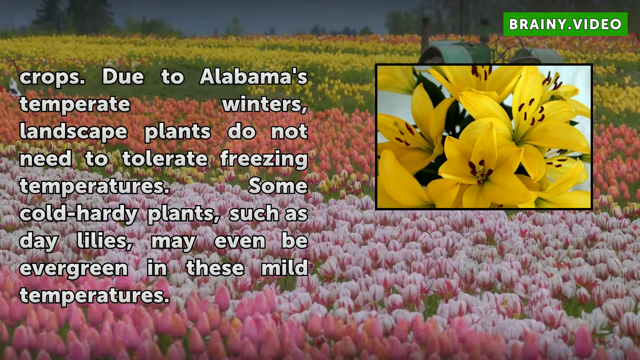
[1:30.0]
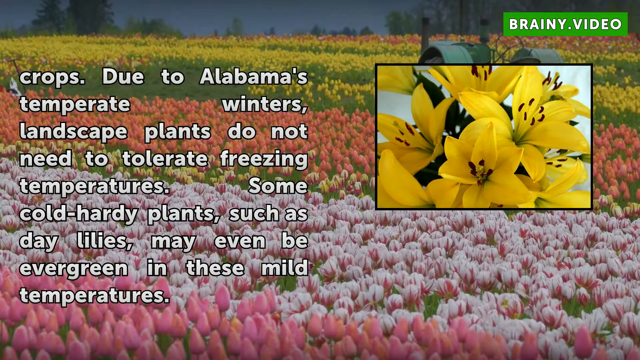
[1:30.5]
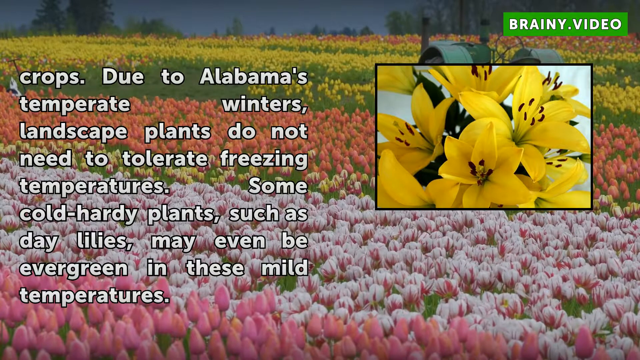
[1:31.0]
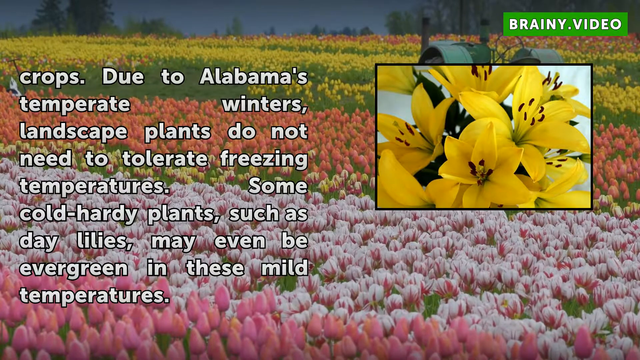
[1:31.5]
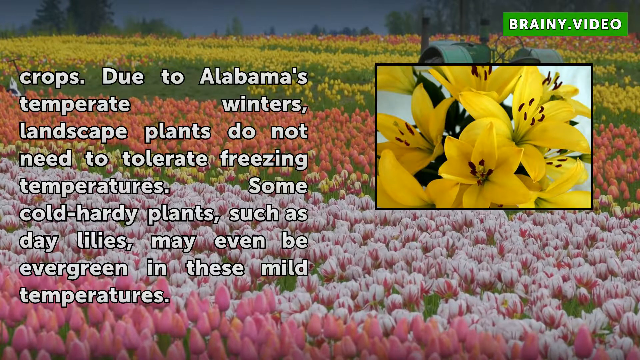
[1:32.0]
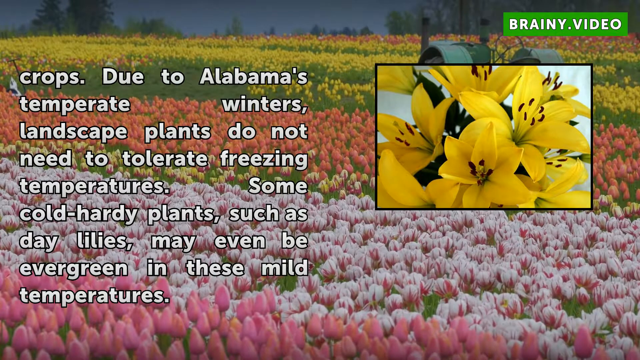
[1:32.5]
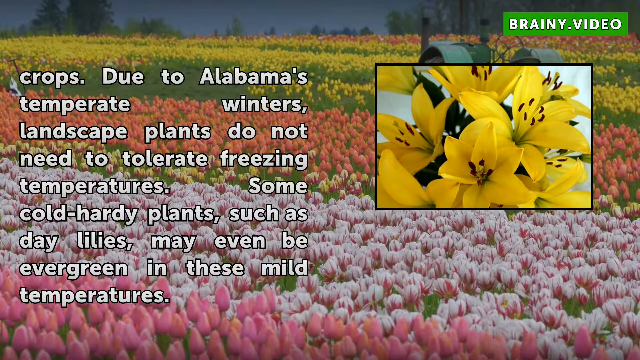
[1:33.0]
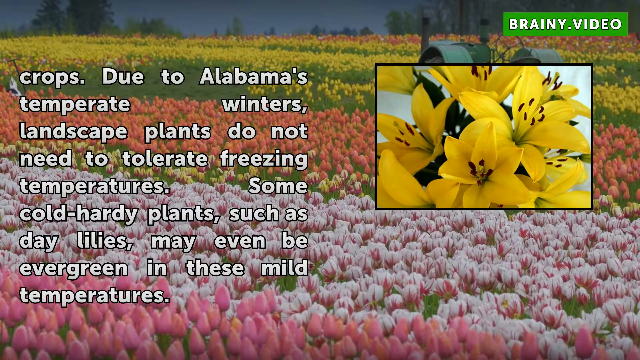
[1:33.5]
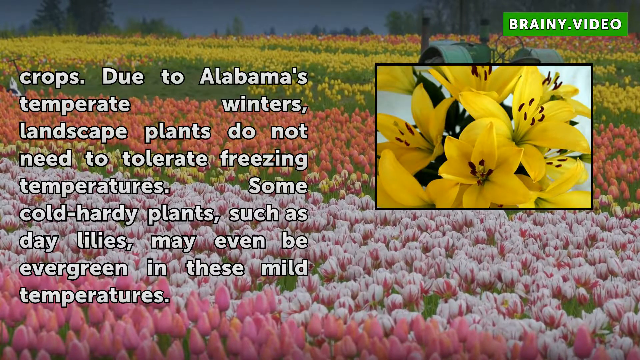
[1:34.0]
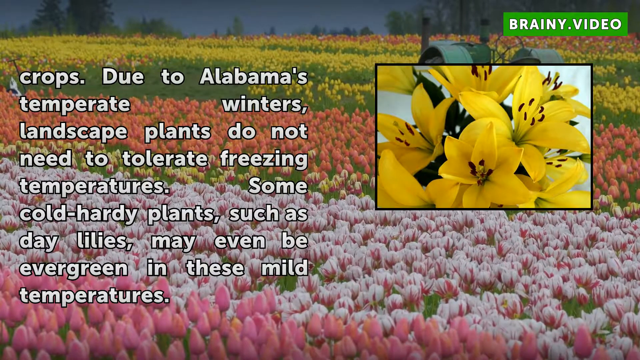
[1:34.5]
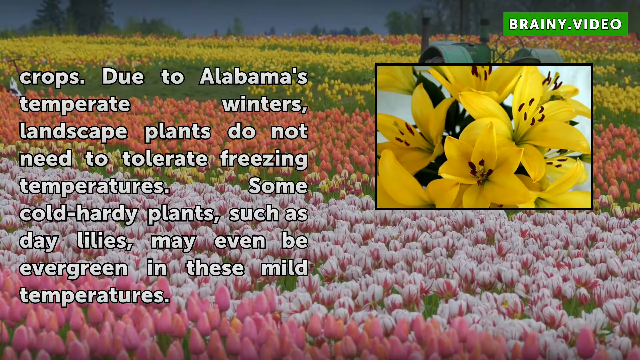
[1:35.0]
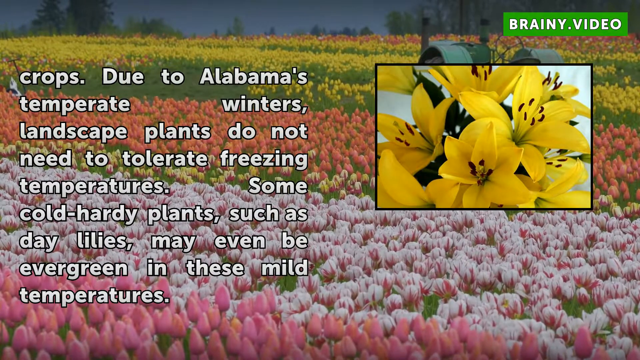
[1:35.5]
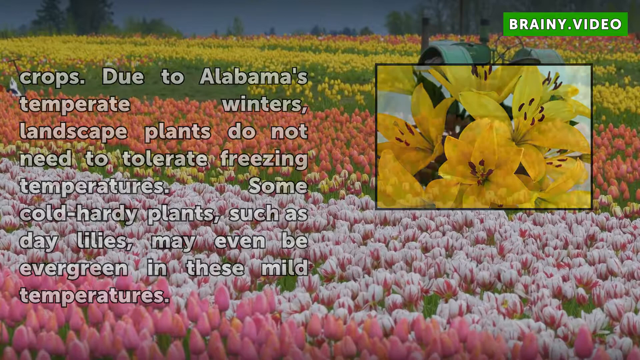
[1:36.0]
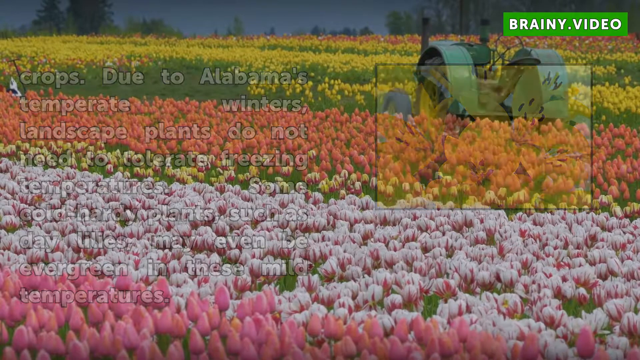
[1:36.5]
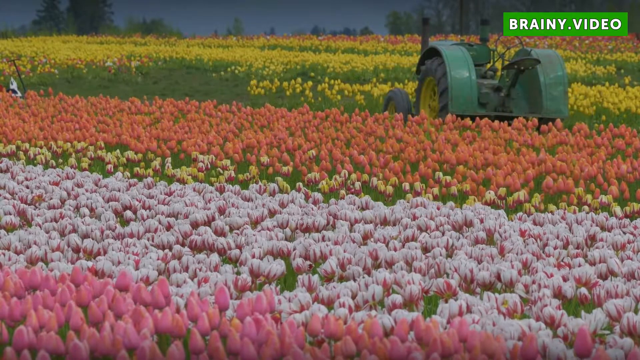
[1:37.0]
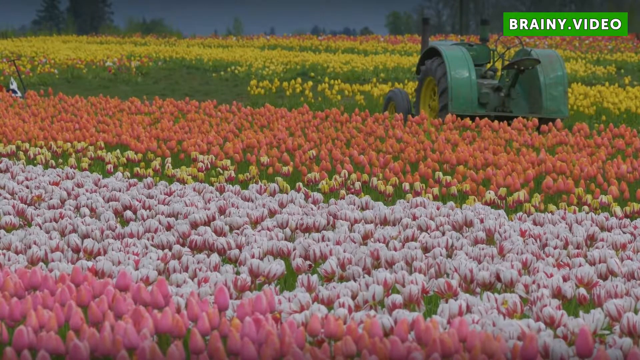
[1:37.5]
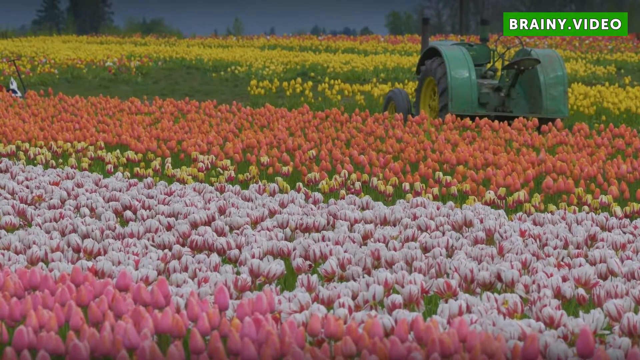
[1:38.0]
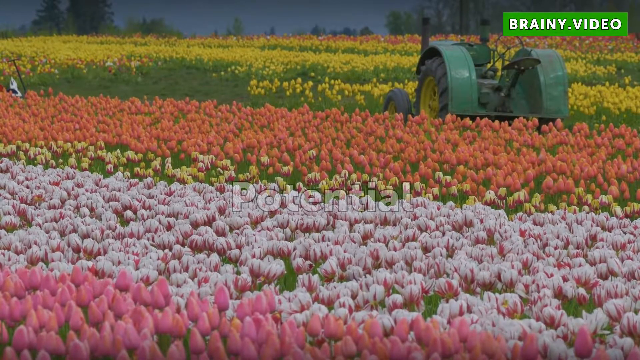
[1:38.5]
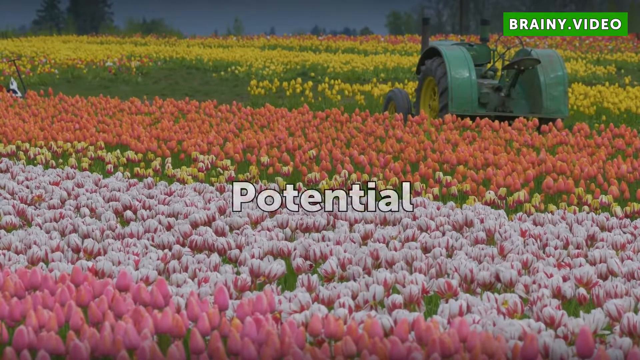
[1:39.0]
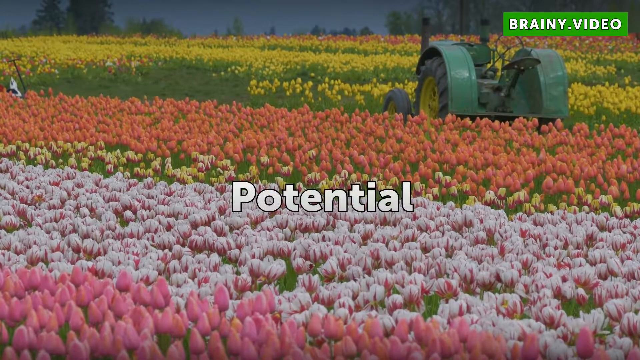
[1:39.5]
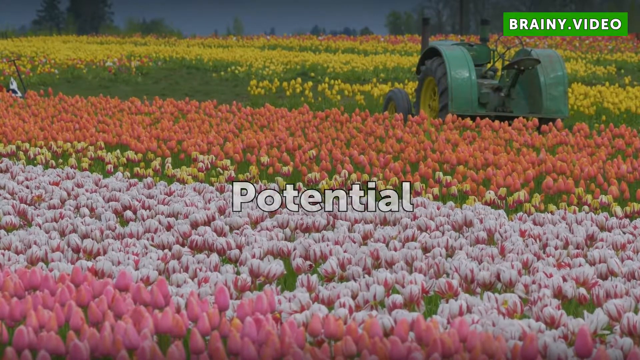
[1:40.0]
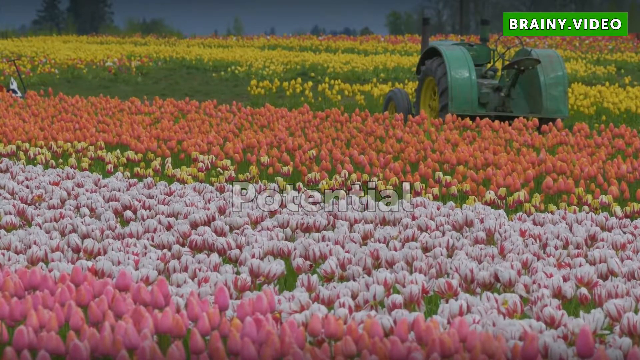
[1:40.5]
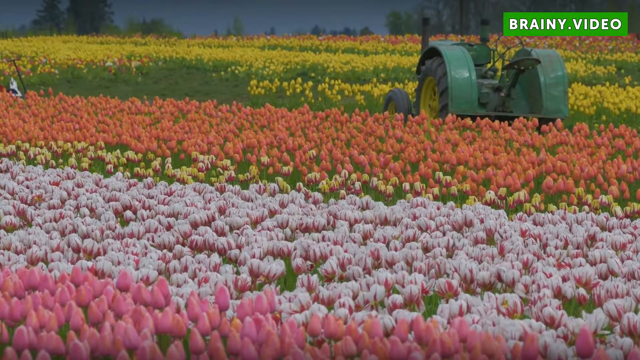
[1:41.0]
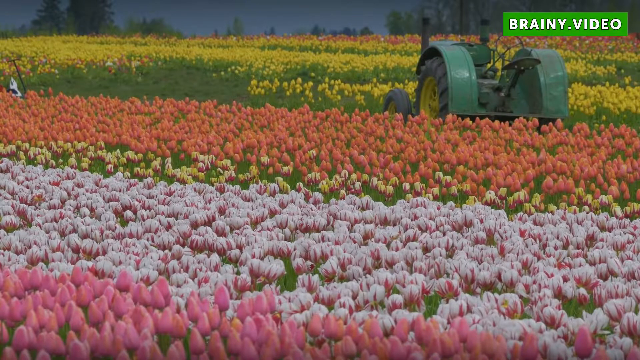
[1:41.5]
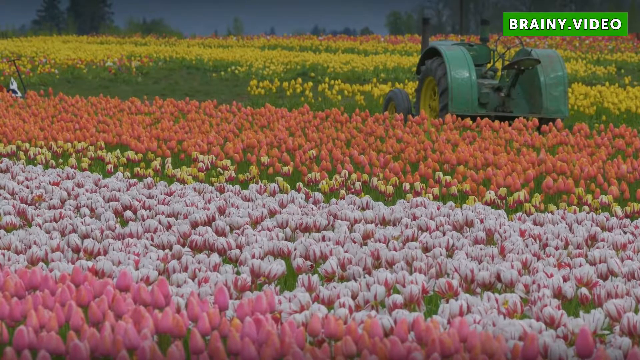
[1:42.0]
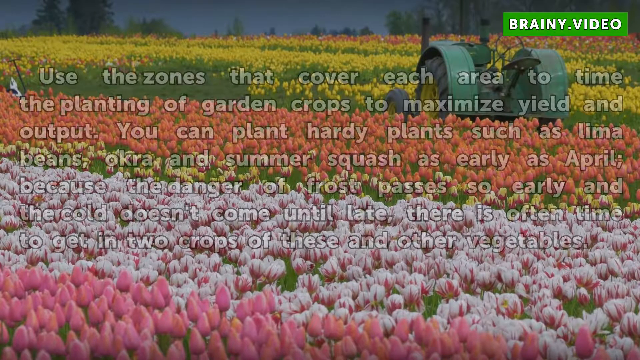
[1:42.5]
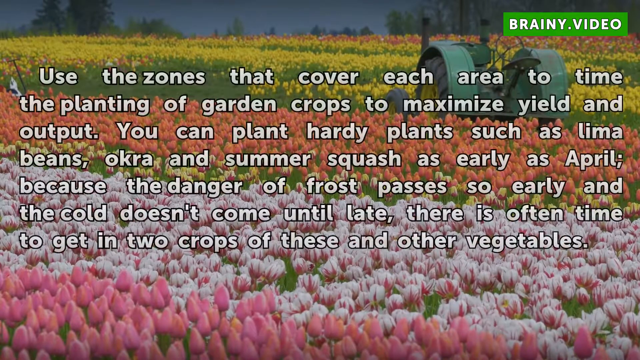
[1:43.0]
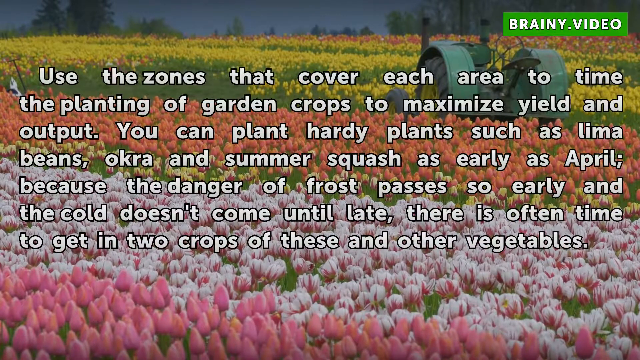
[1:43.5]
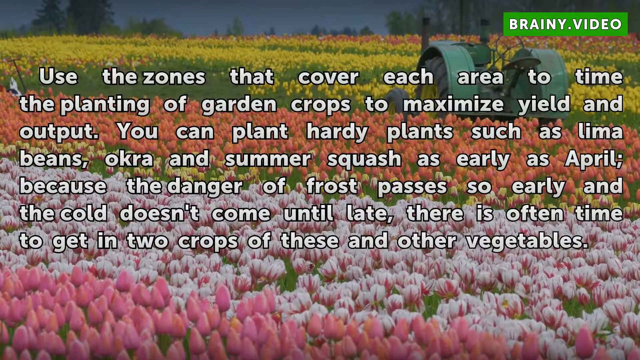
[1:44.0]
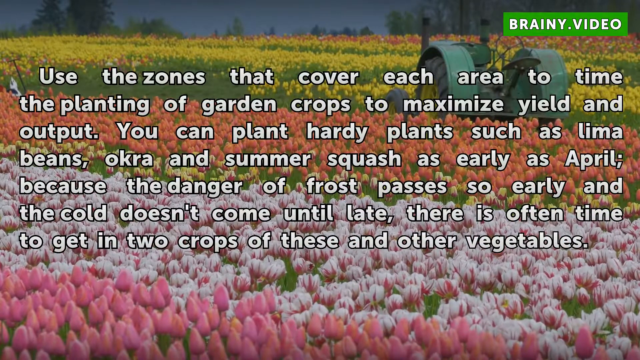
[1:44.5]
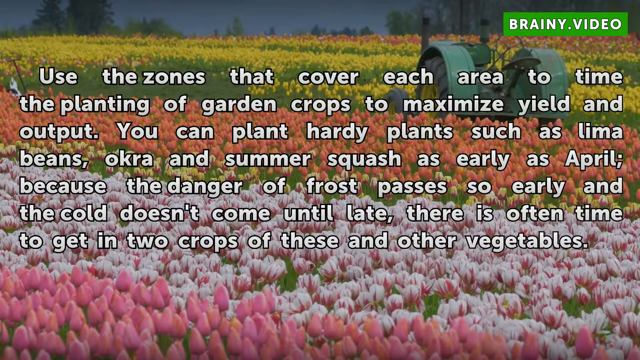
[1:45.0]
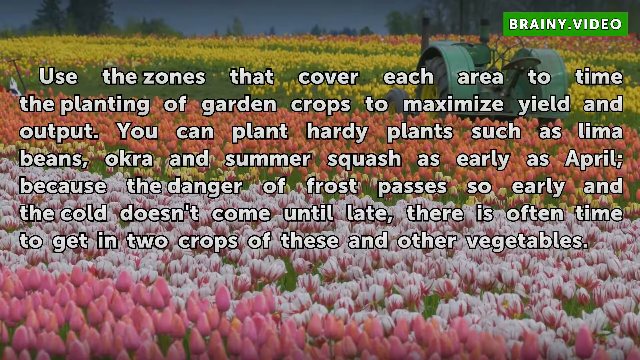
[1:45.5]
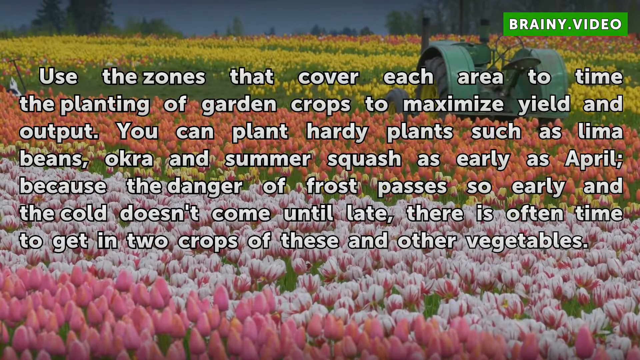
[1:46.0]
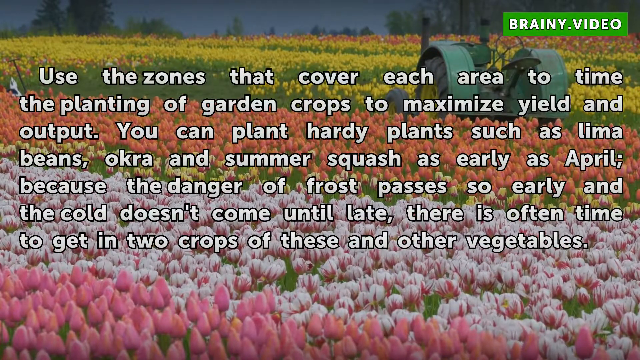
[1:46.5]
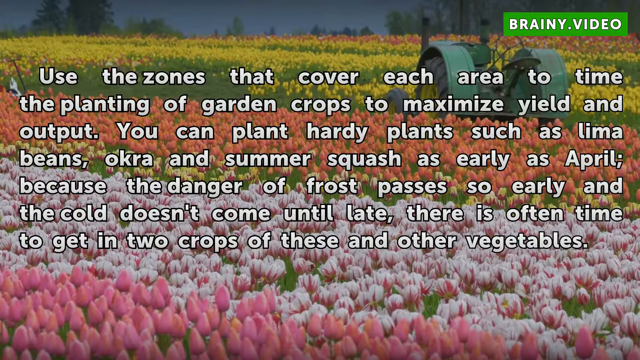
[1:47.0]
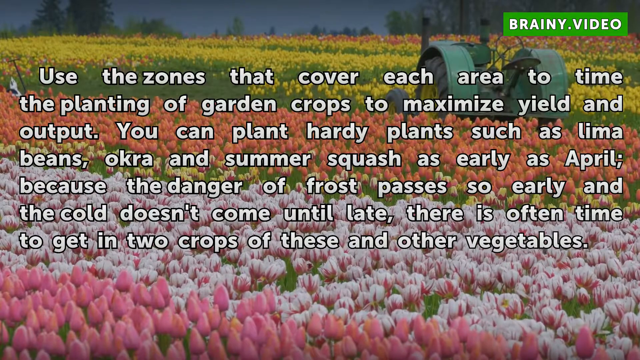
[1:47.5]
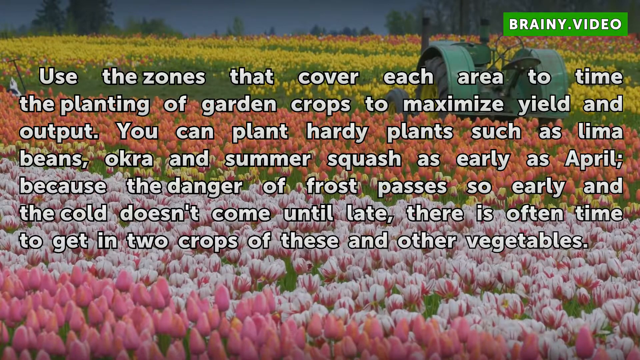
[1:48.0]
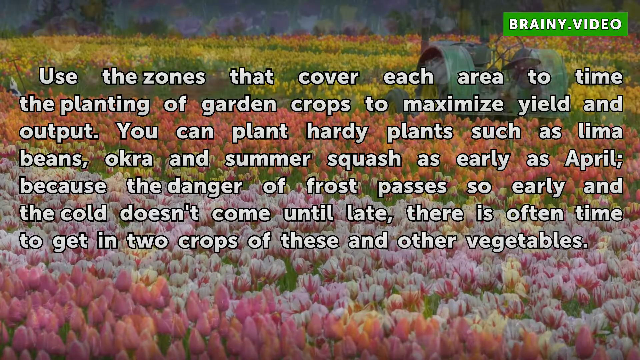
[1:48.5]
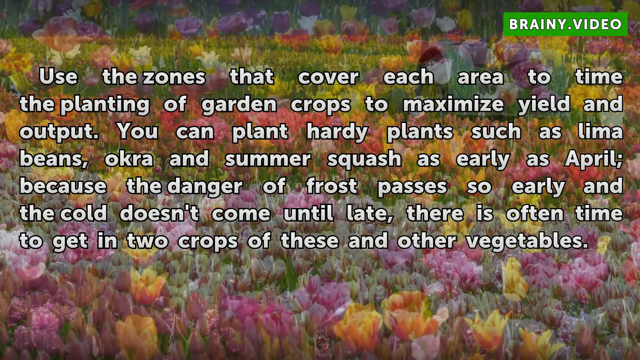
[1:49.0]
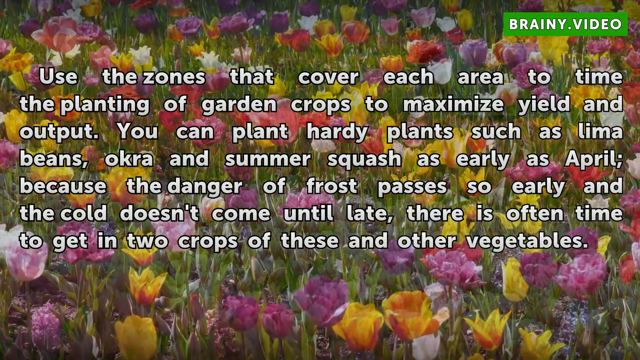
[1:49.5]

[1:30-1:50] The text stays on the screen while the background footage changes to a view of a field of tulips. They seem to be planted by colour in three horizontal rows: the lowest row is pink and white, the middle row is coral or orange, and the top row in the distance is yellow. Across the top of the screen is a dark grey stripe of horizon with several trees growing. To the right, the small photo of bright yellow lilies is still visible. The text and the small photo disappear, revealing a green tractor with large yellow wheels and black tyres parked in the field of tulips in the top right-hand corner of the screen. White text reading "Potential" then appears in the centre of the screen. It fades away and is replaced by new white text: "Use the zones that cover each area to time the planting of garden crops to maximise yield and output. You can plant hardy plants such as lima beans, okra and summer squash as early as April because the danger of frost passes so early and the cold doesn't come until late. There is often time to get in two crops of these and other vegetables."